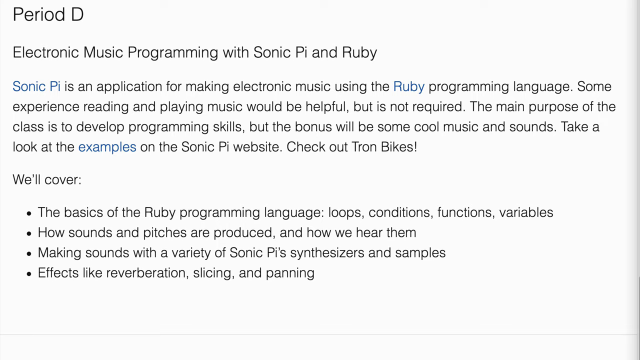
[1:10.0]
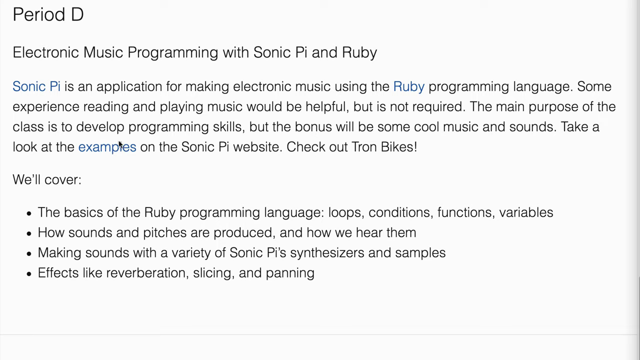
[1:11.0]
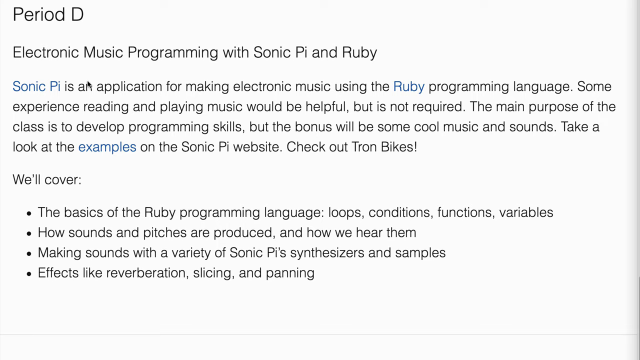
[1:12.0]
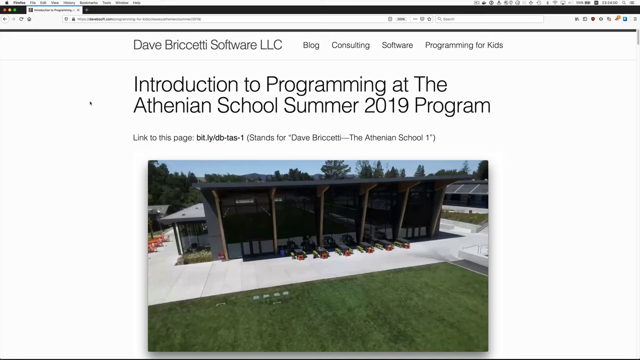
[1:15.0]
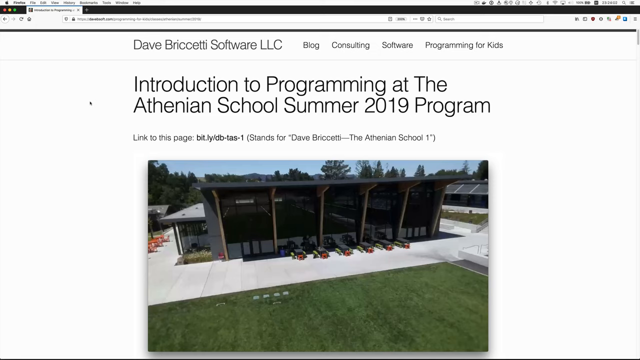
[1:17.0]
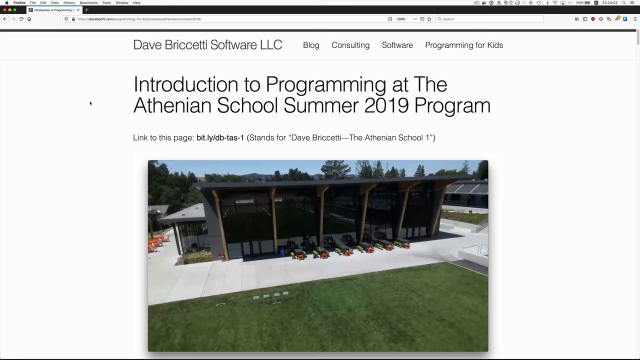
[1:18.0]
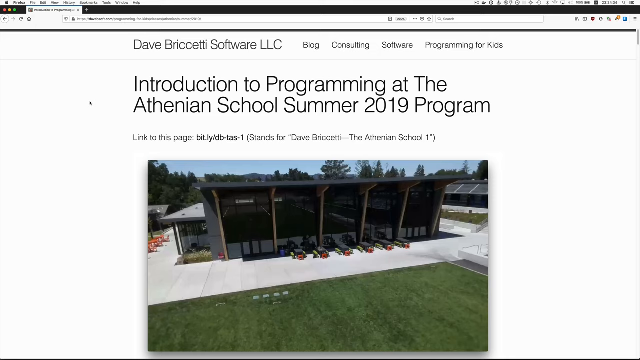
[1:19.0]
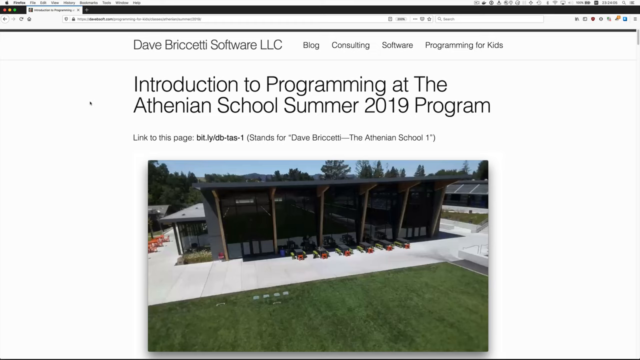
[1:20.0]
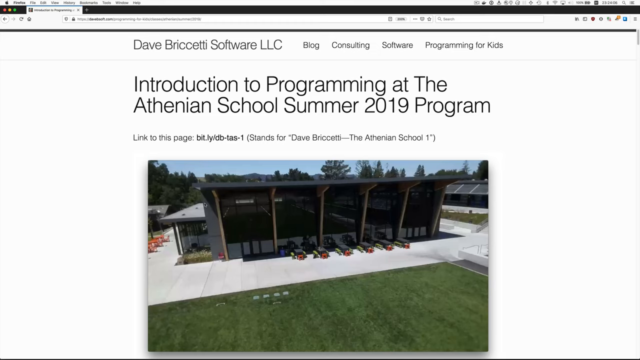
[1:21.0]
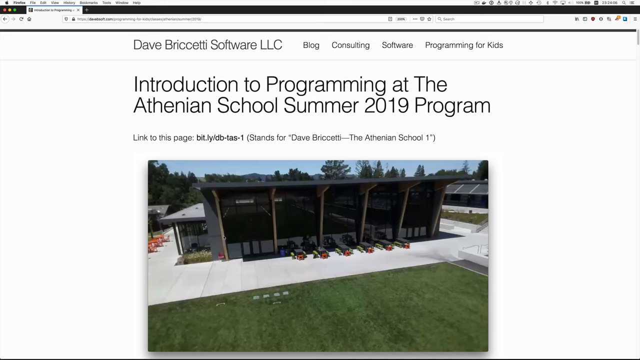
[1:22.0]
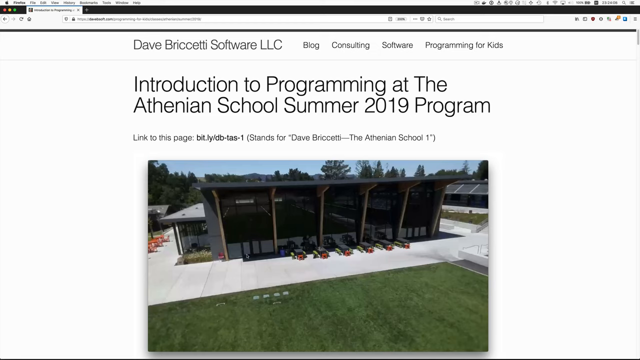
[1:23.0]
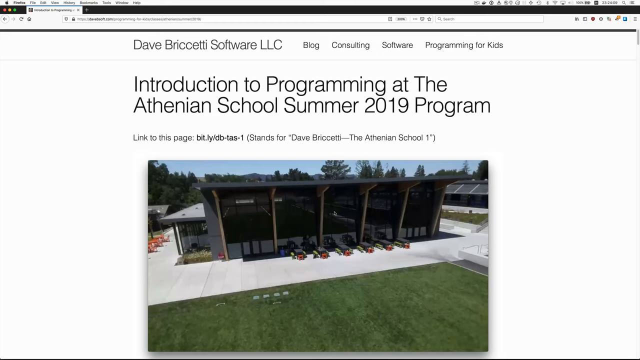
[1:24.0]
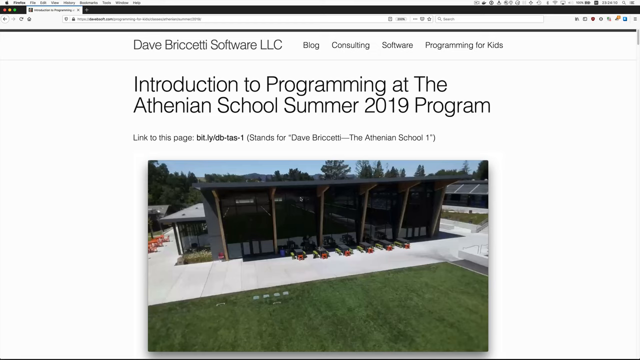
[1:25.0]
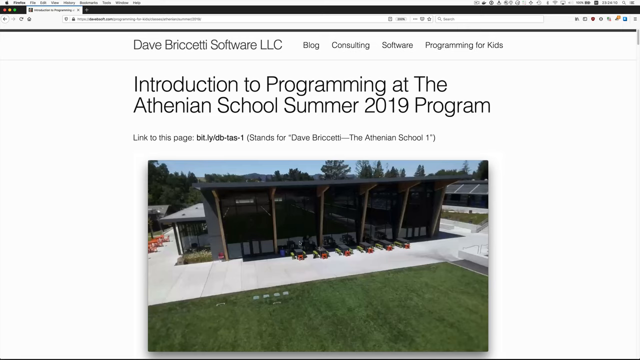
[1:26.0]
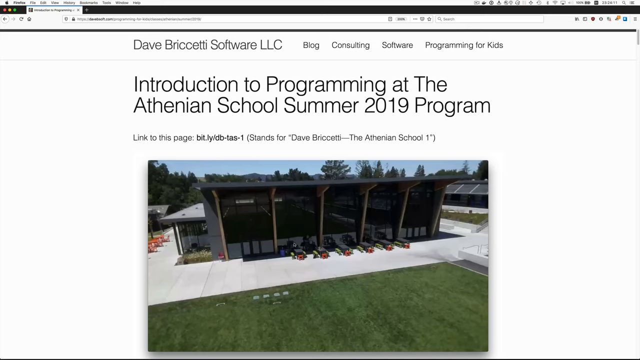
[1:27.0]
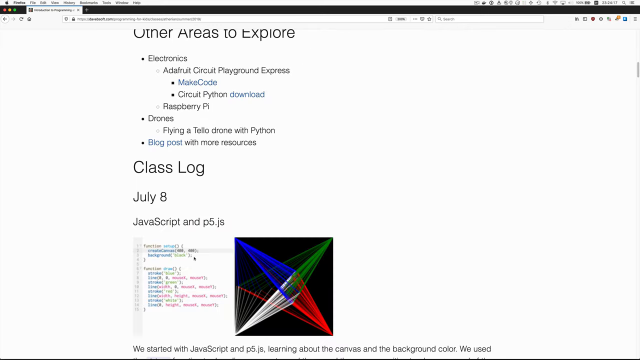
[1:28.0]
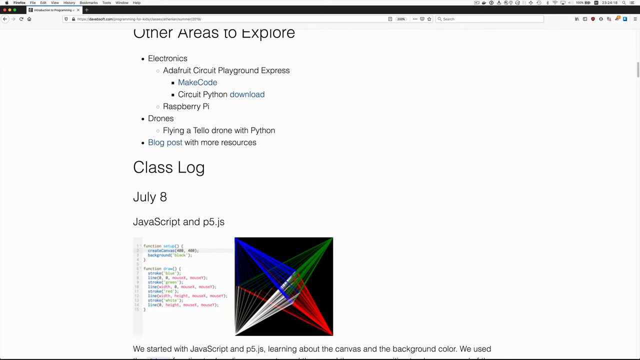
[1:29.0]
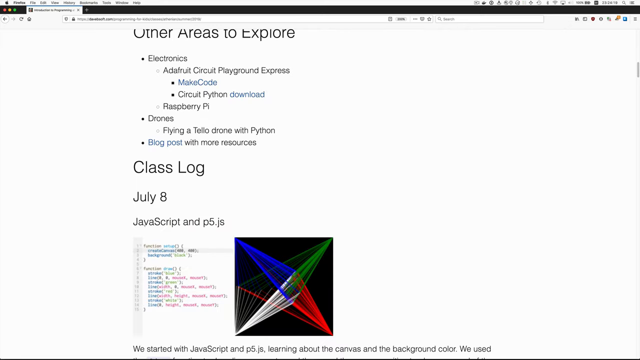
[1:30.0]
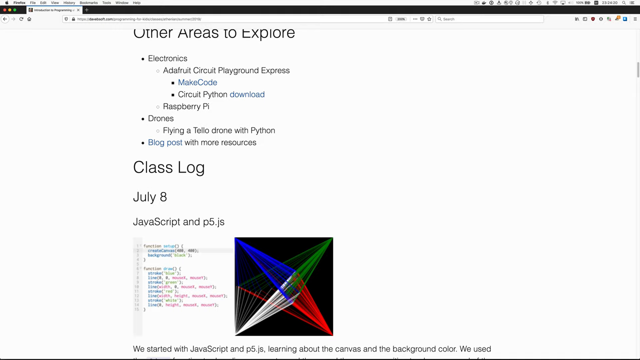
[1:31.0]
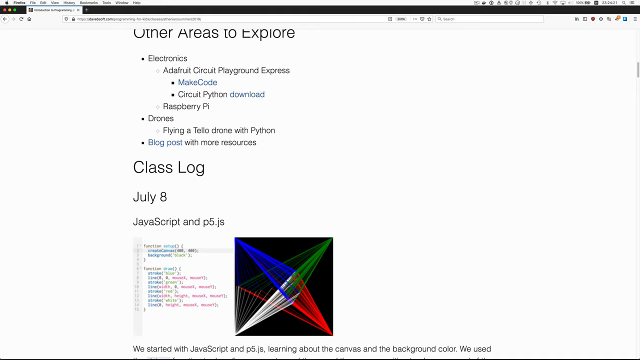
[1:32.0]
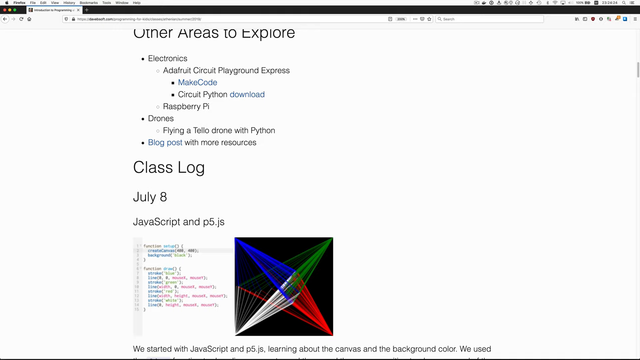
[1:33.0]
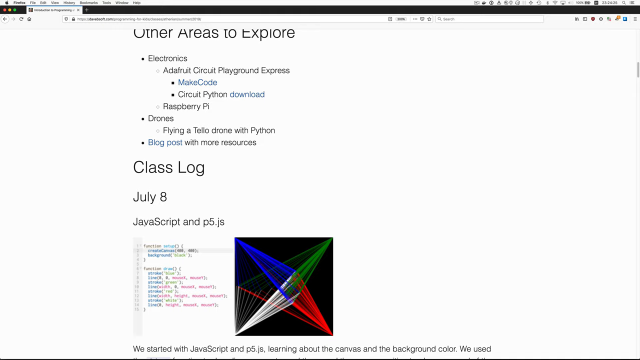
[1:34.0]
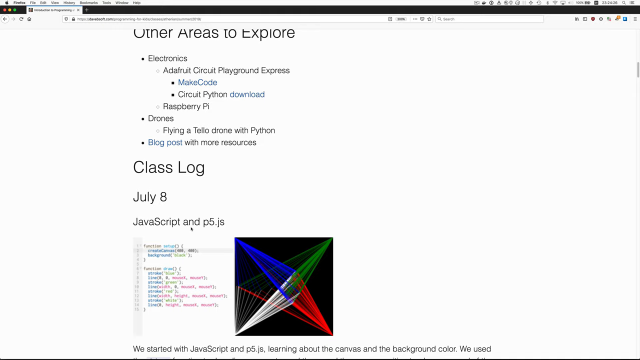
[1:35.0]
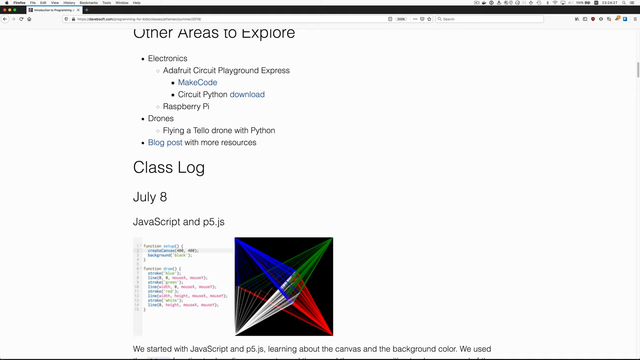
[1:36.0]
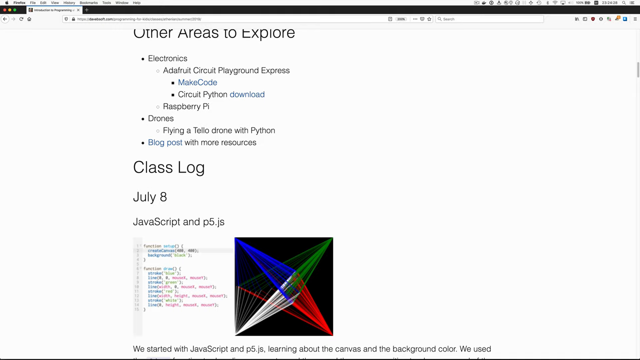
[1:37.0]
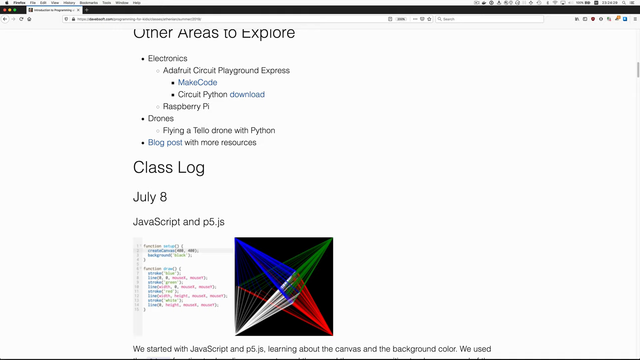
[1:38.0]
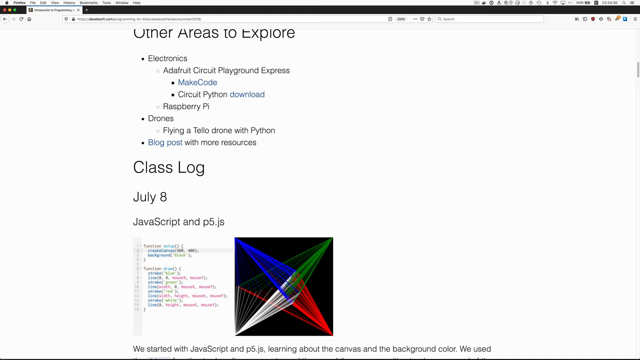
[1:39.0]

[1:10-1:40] Words appear at the top, under the heading period D: "electronic music programming with Sonic Pi and Ruby. Sonic Pi is an application for making electronic music using the Ruby programming language. Some experience reading and playing music would be helpful, but it is not required. The main purpose of the class is to develop programming skills, but the bonus will be some cool music and sounds. Take a look at the examples on the Sonic Pi website. Check out Tron Bikes." The text goes on to list topics: the basics of the Ruby programming language, loops, conditions, functions, variables, how sound and pitches are produced and how we hear them, making sounds with a variety of Sonic Pi synthesizers and samples, and effects like reverberation, slicing, and panning. This text takes up the full screen.